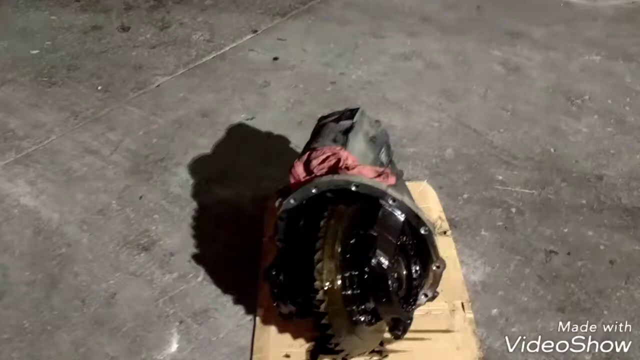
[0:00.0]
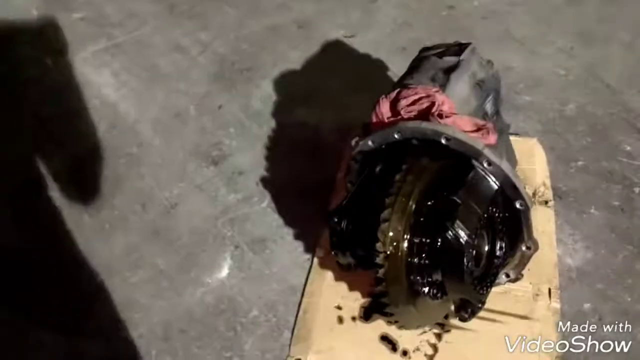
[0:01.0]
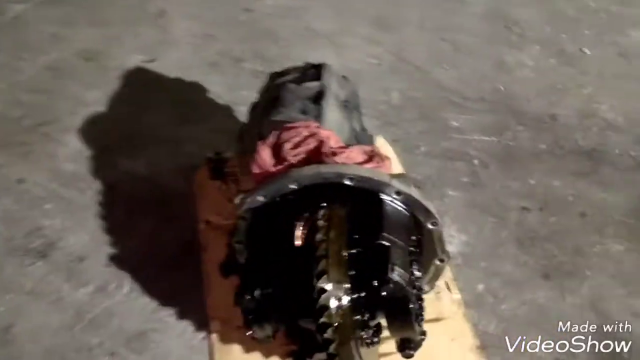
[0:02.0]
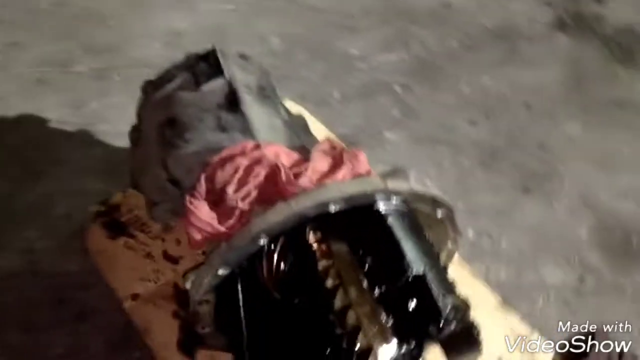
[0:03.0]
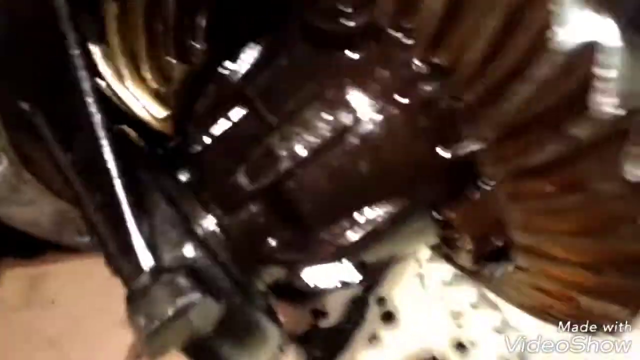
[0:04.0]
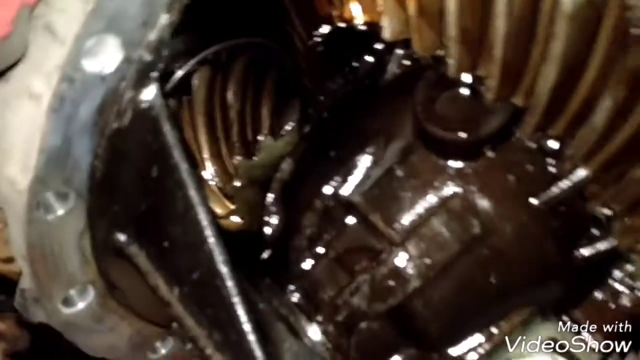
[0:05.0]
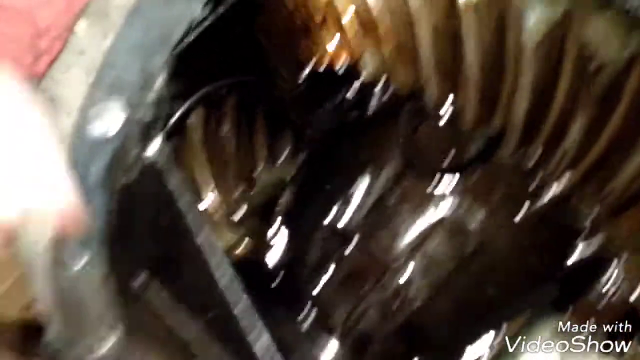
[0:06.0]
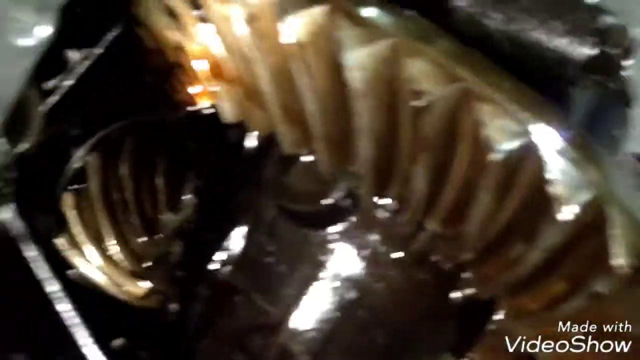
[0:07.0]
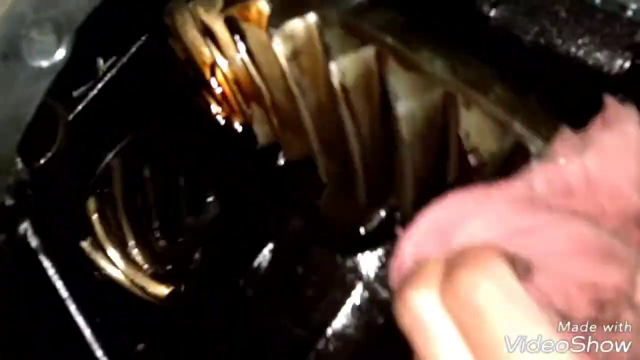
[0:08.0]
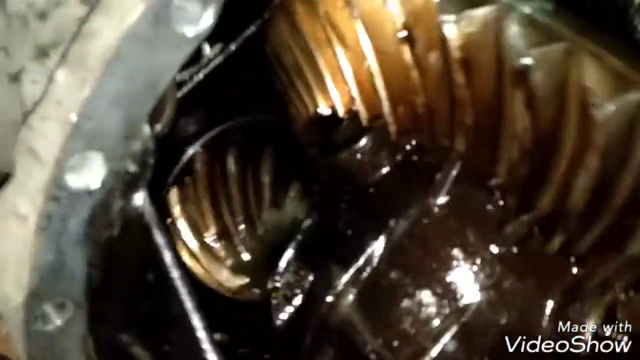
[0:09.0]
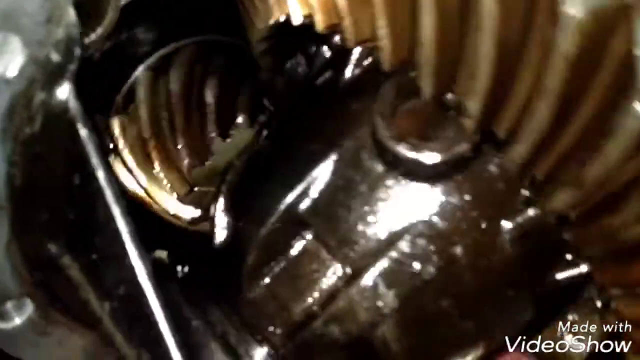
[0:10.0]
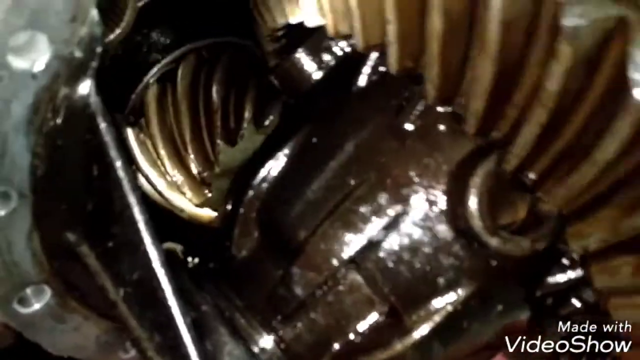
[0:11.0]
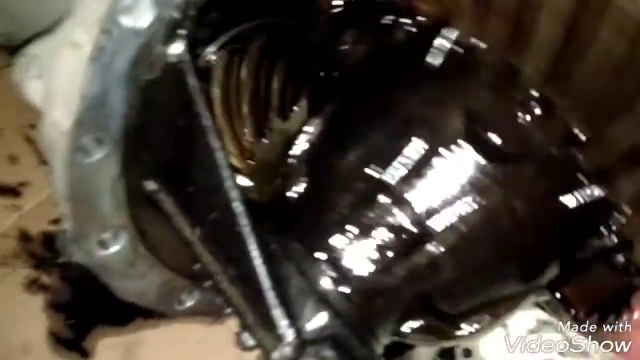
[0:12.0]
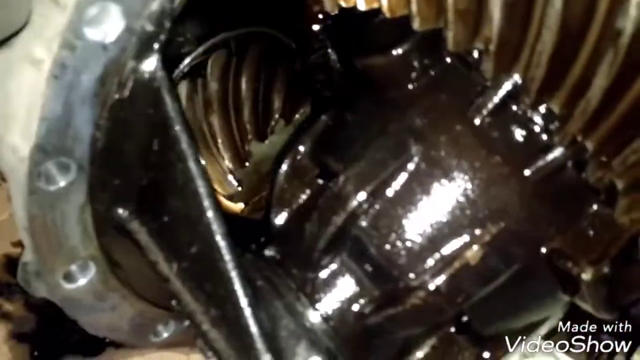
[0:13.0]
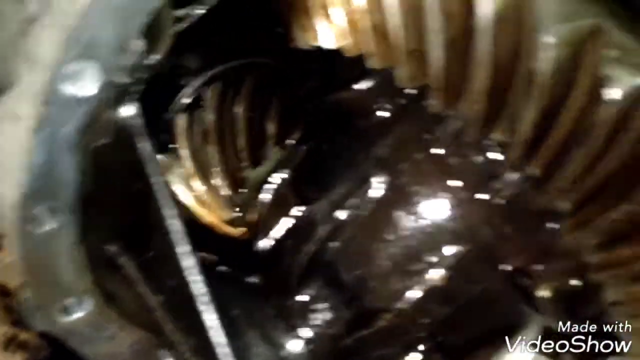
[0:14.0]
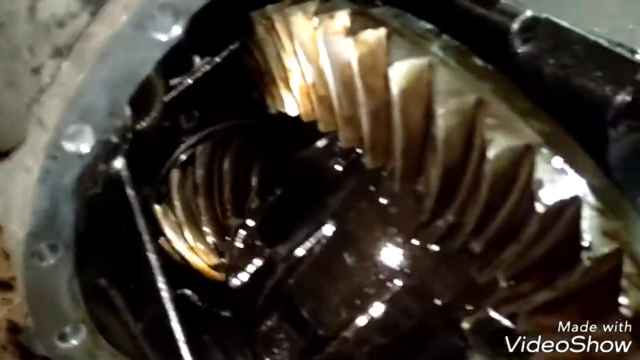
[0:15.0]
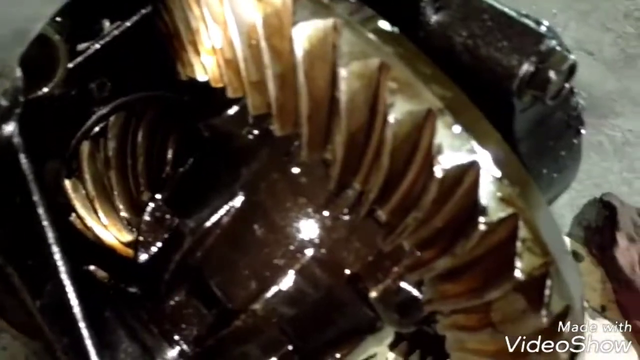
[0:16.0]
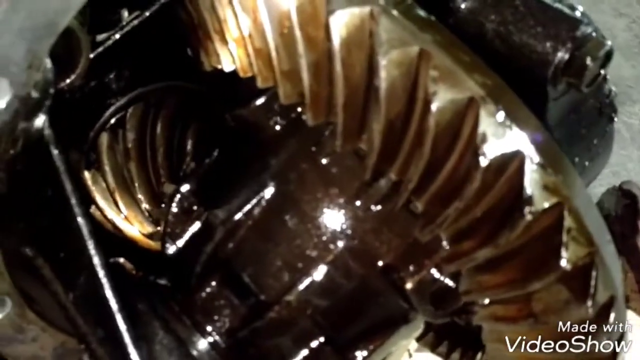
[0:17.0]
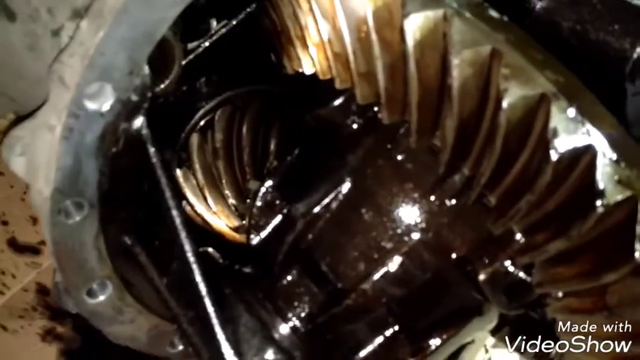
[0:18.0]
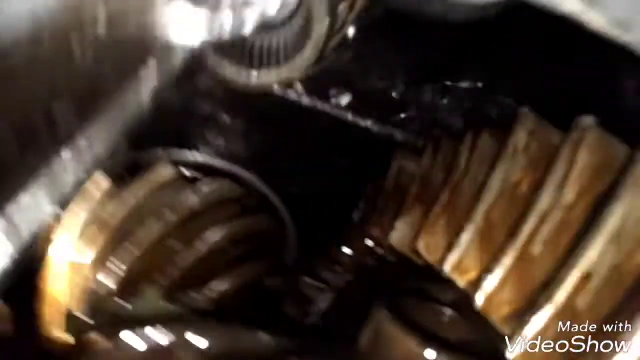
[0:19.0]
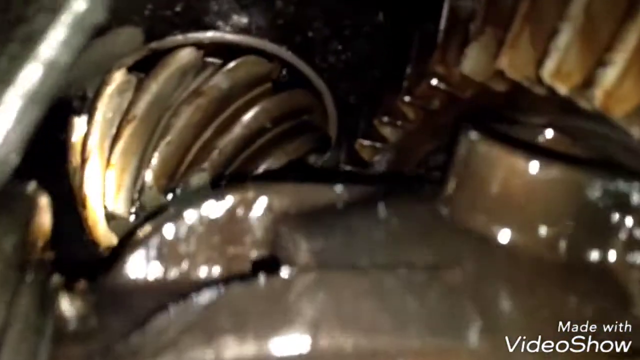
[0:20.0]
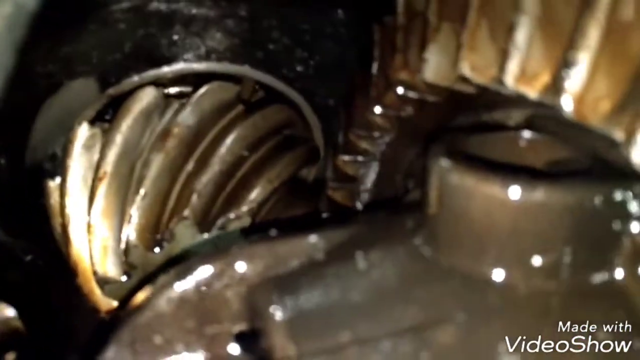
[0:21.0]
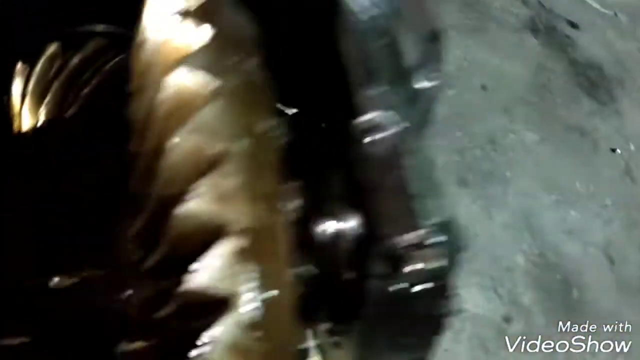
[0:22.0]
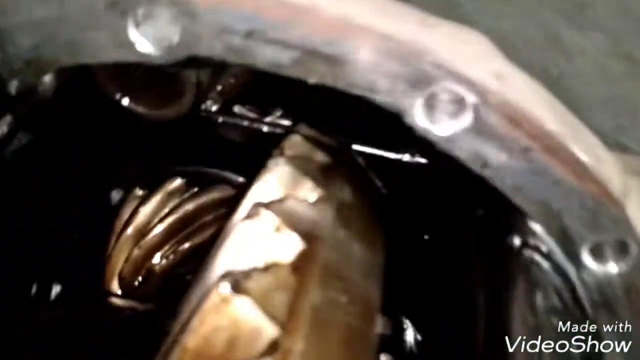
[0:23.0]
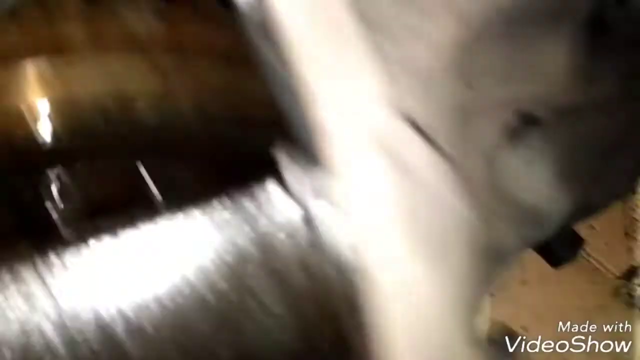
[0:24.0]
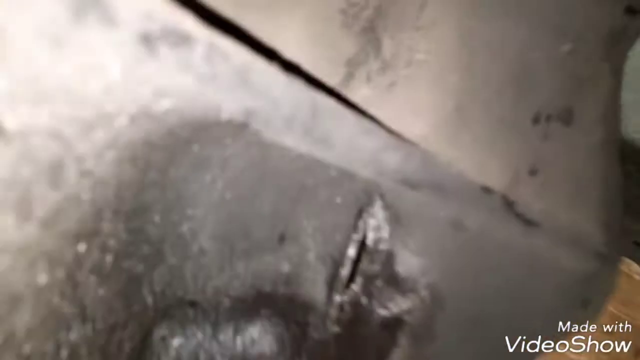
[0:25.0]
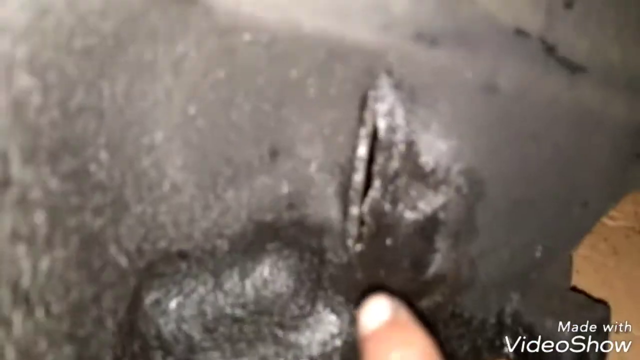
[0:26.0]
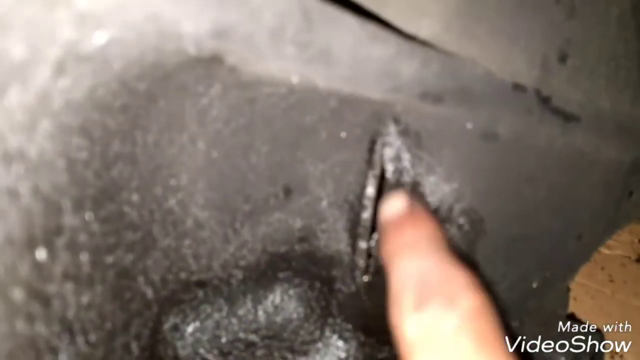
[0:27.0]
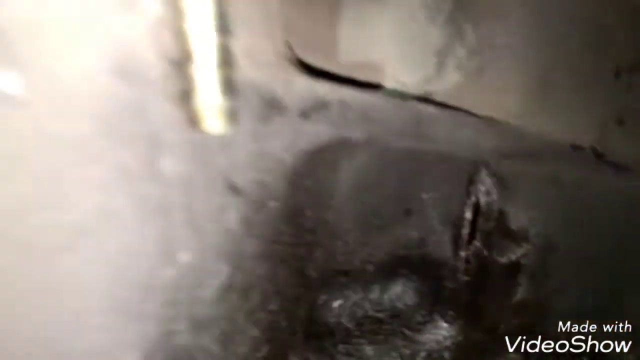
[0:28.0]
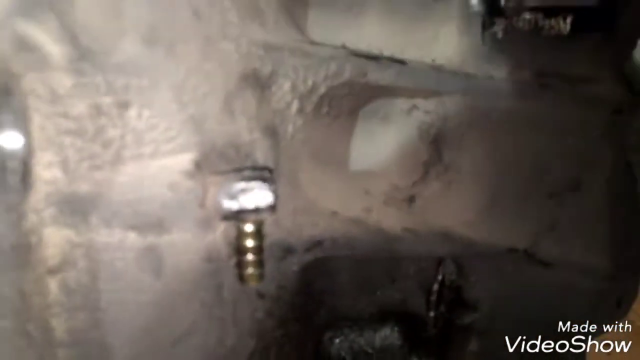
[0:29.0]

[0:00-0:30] Outdoors, a piece of machinery rests on gray concrete ground; it appears to be an automobile transmission or possibly a torque converter, something to do with an automobile. A wheel faces the camera, its grooved part facing forward. The chassis of the machinery is round and cone-shaped, getting smaller toward the back; it is not very long, possibly 18 inches. It is dirty, and a red shop rag is on top of it. The shaky camera pans close to it, all the way up to its insides, which are covered in motor oil or transmission fluid. A person holding a shop rag turns it, showing its insides and how one wheel is connected to another wheel and spins it in a different direction.